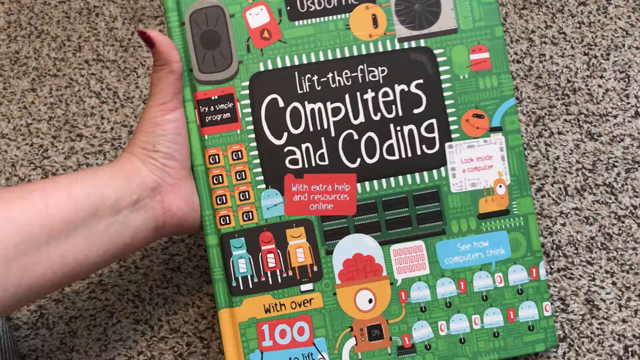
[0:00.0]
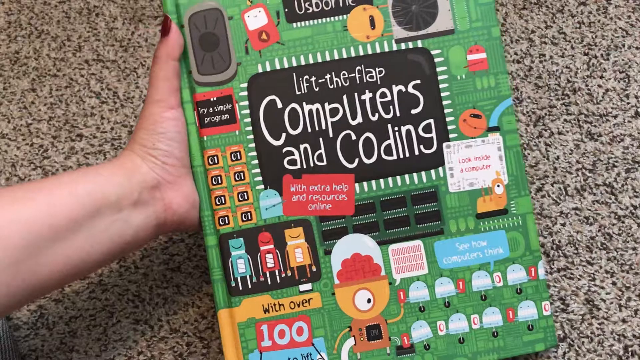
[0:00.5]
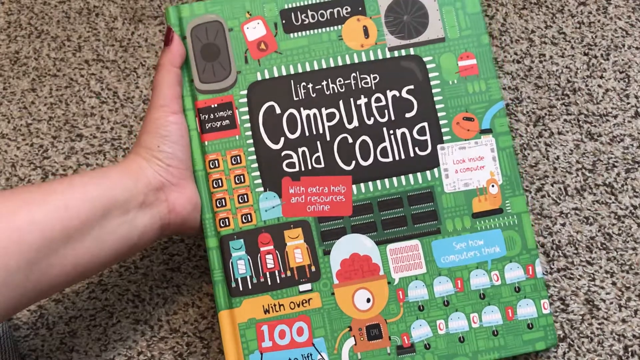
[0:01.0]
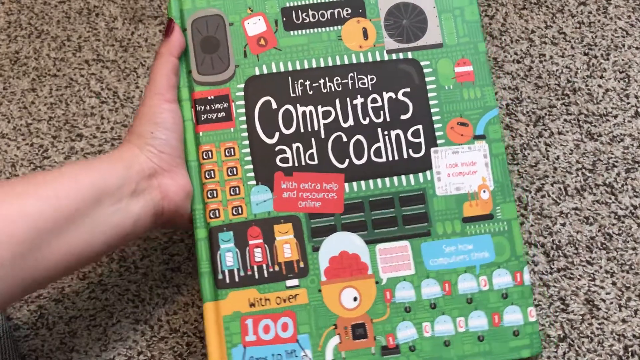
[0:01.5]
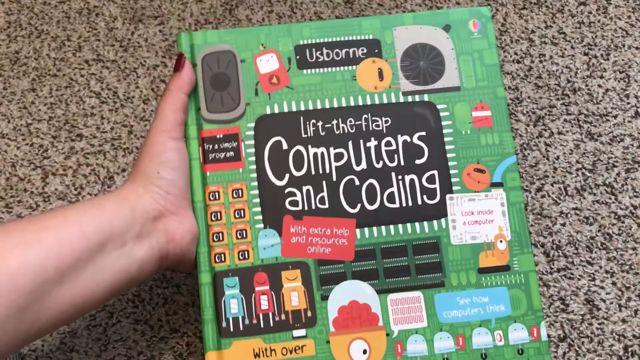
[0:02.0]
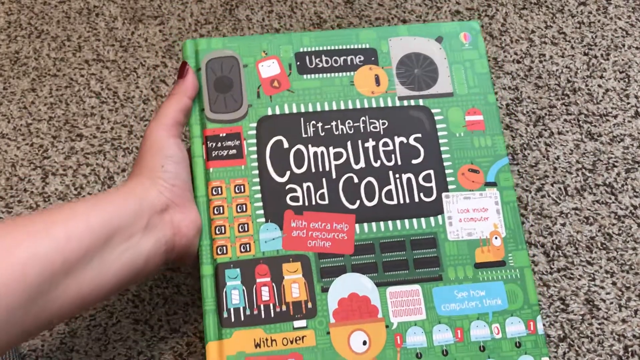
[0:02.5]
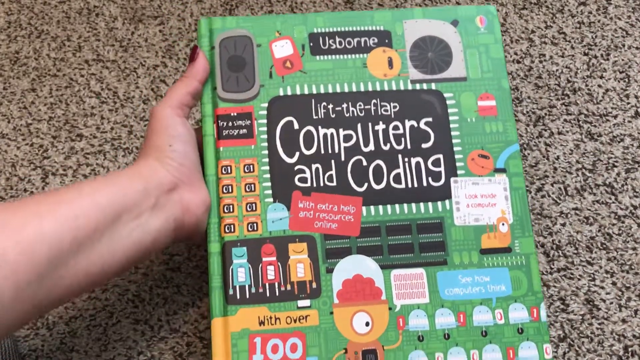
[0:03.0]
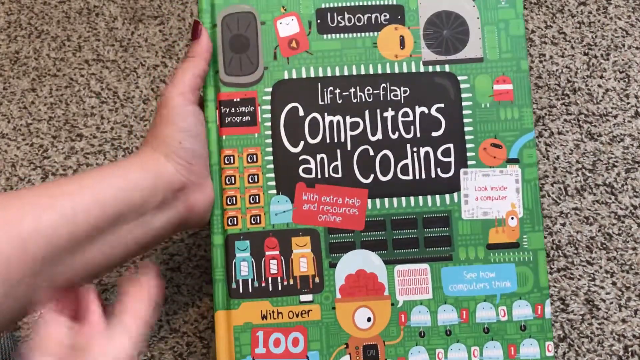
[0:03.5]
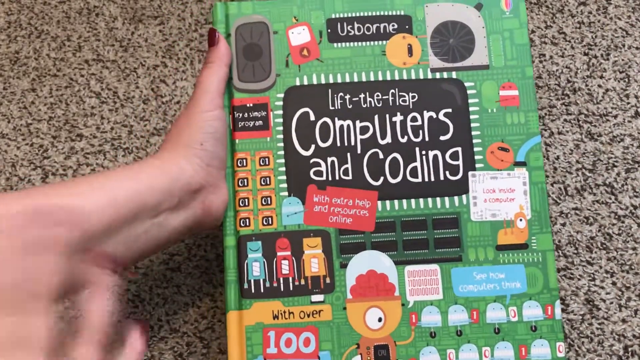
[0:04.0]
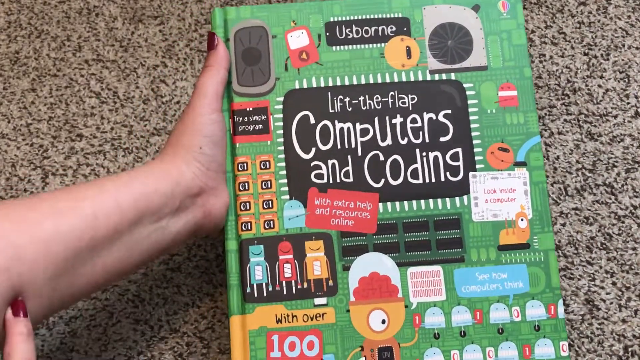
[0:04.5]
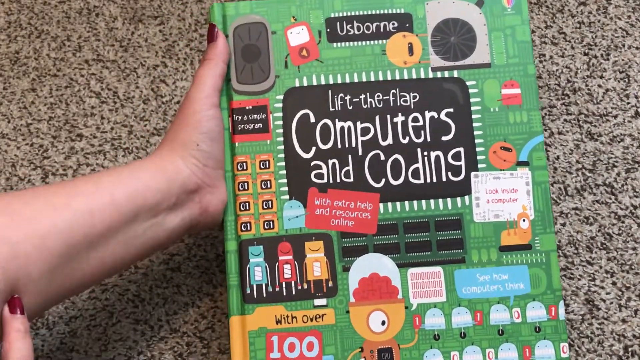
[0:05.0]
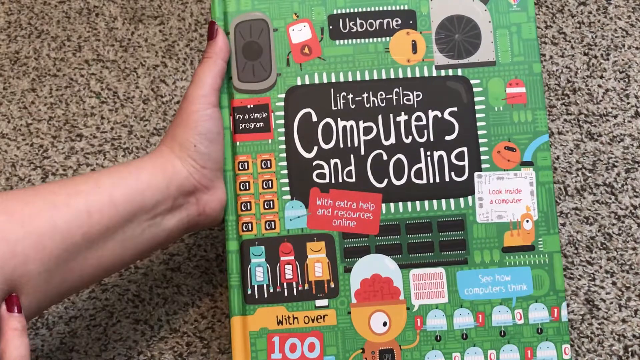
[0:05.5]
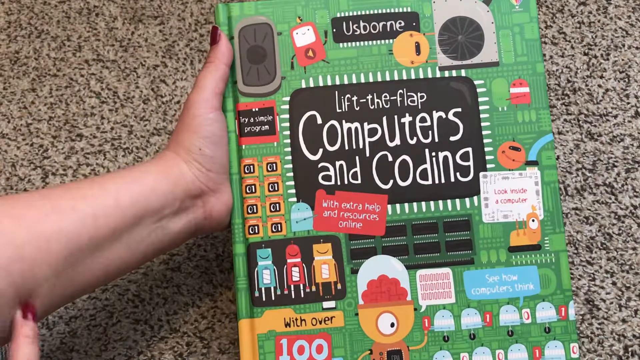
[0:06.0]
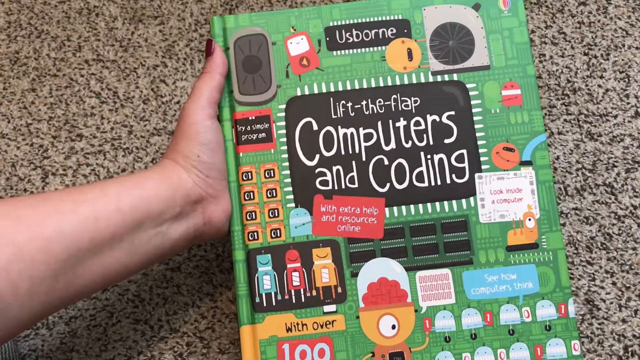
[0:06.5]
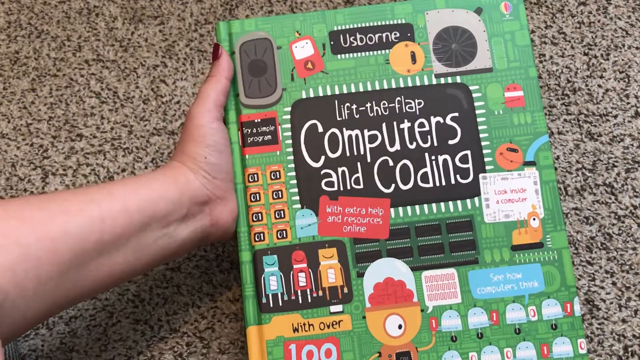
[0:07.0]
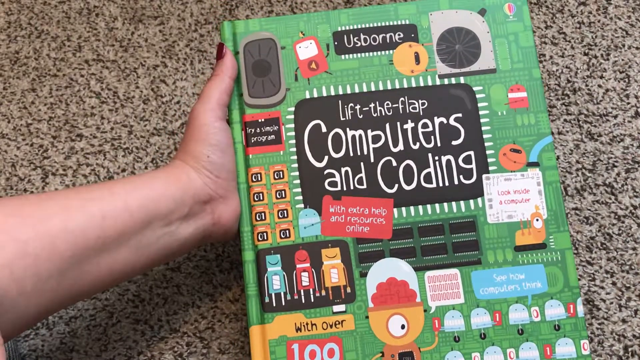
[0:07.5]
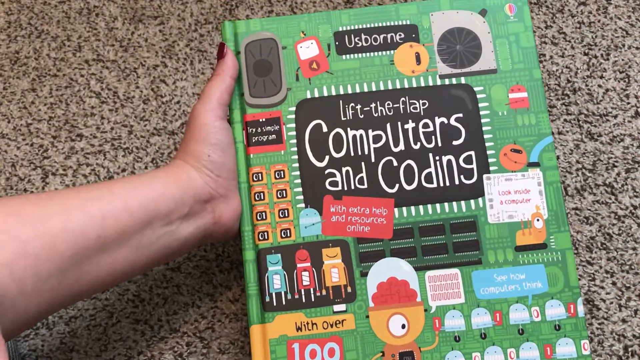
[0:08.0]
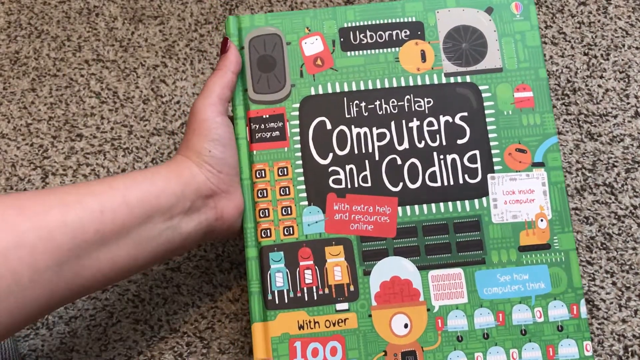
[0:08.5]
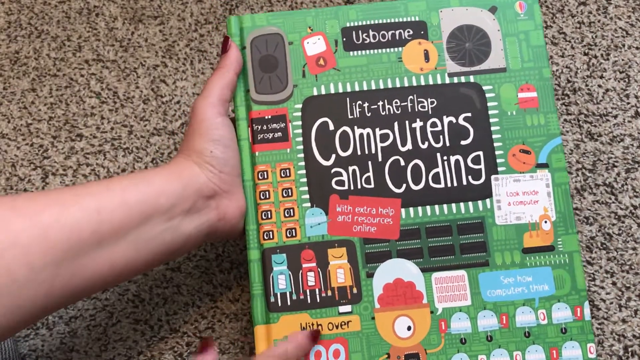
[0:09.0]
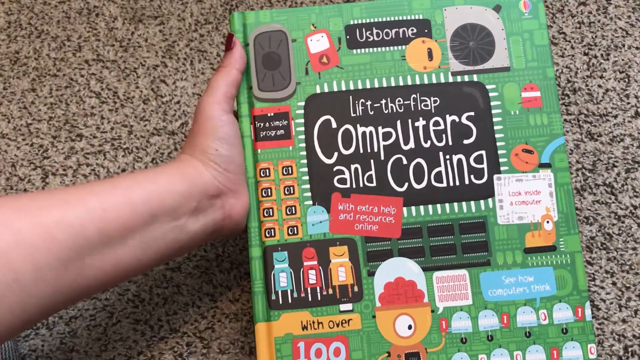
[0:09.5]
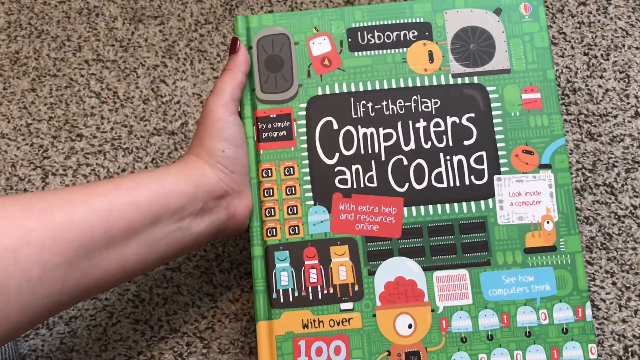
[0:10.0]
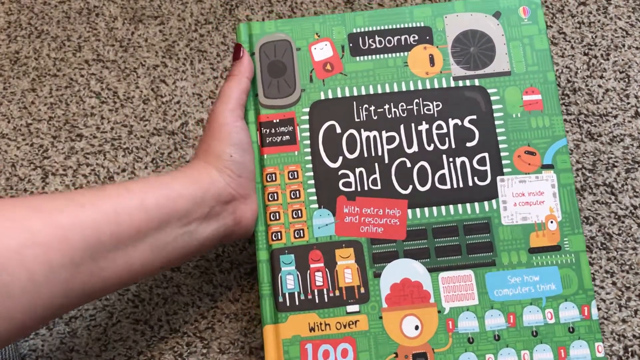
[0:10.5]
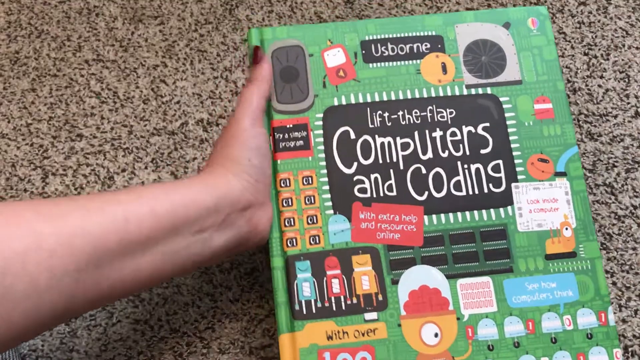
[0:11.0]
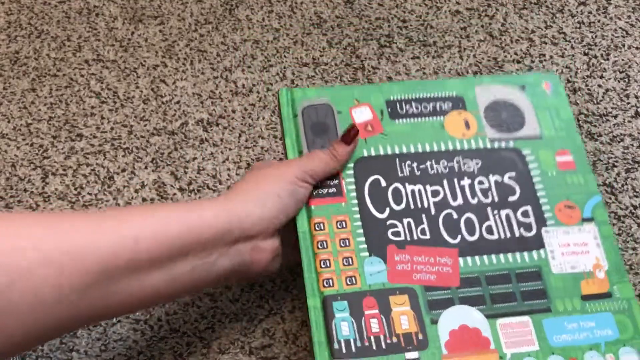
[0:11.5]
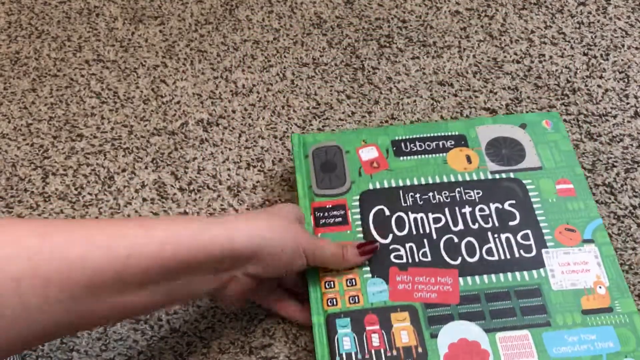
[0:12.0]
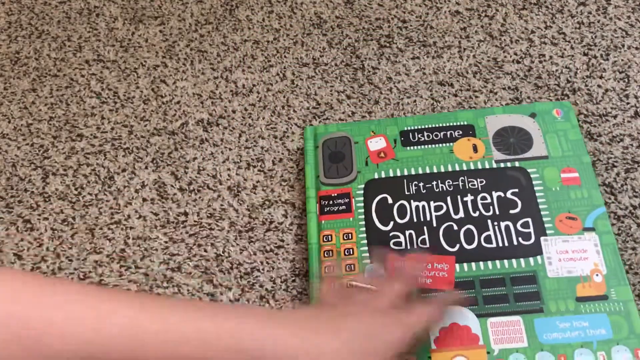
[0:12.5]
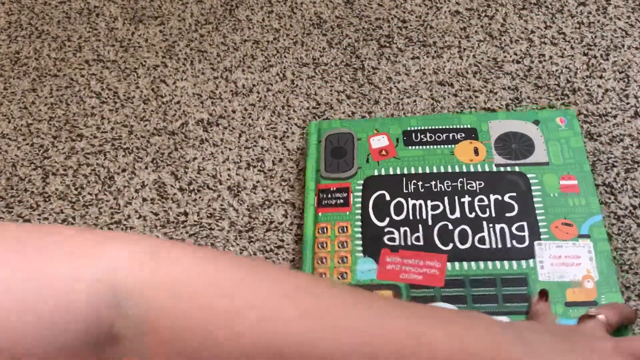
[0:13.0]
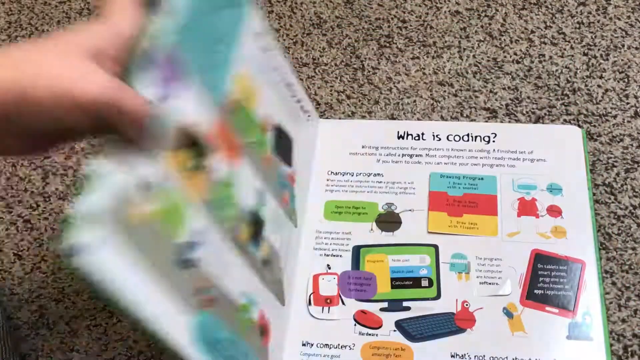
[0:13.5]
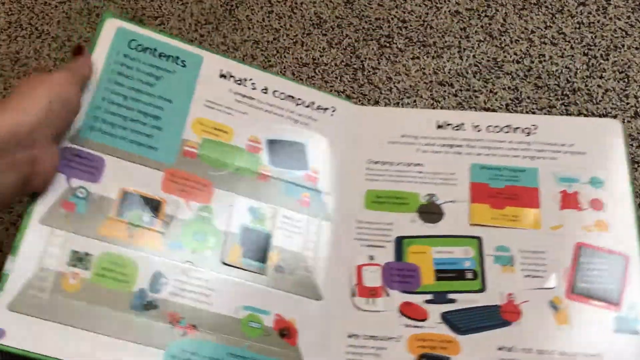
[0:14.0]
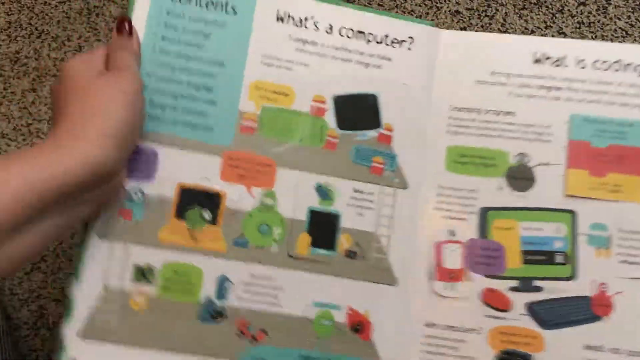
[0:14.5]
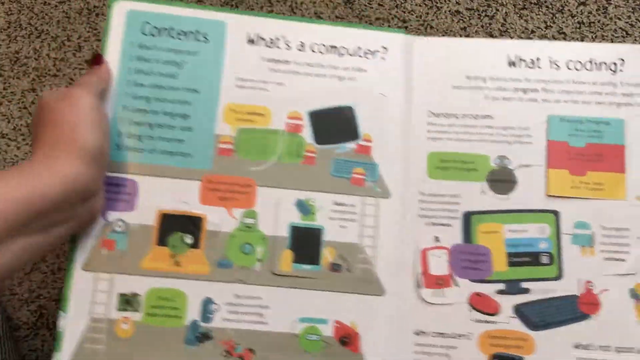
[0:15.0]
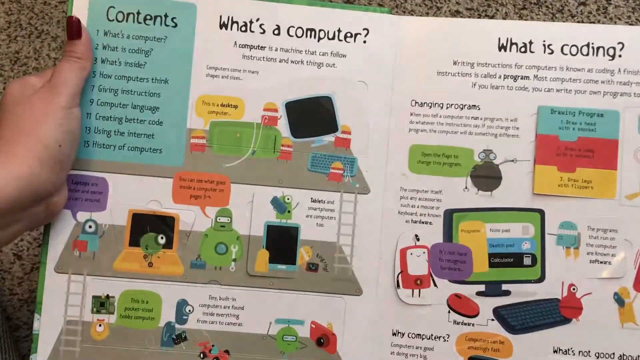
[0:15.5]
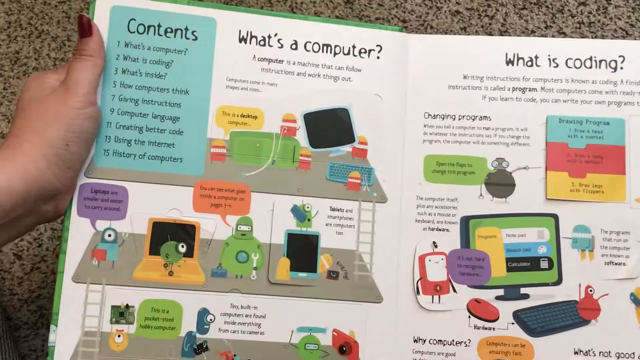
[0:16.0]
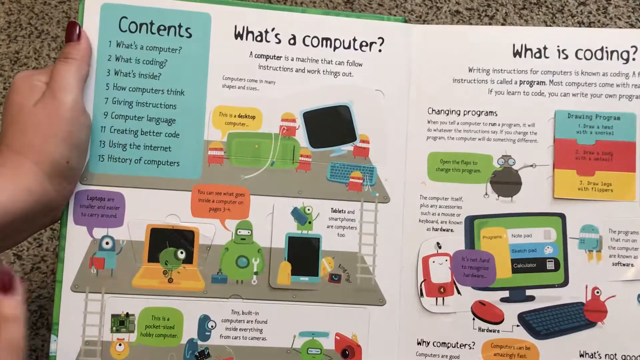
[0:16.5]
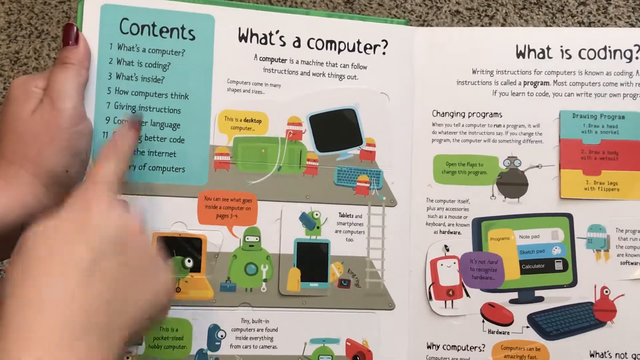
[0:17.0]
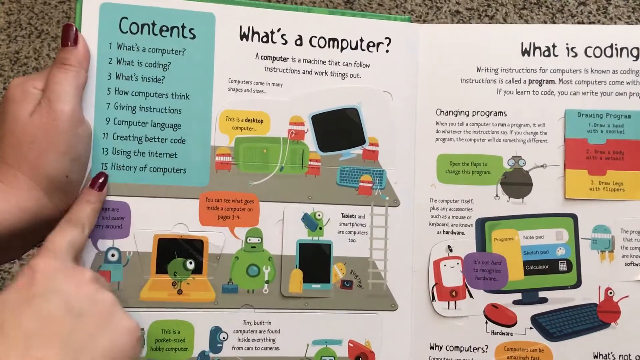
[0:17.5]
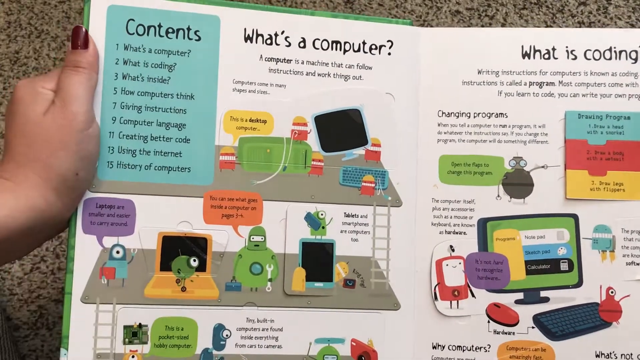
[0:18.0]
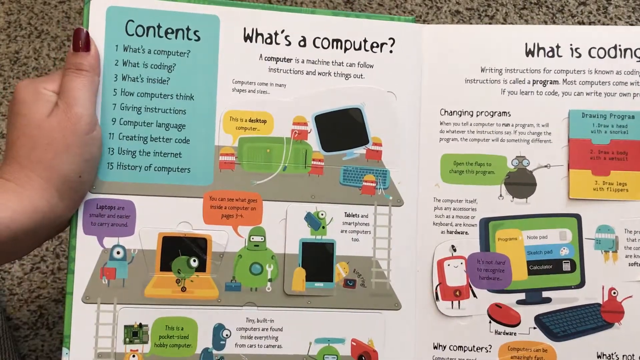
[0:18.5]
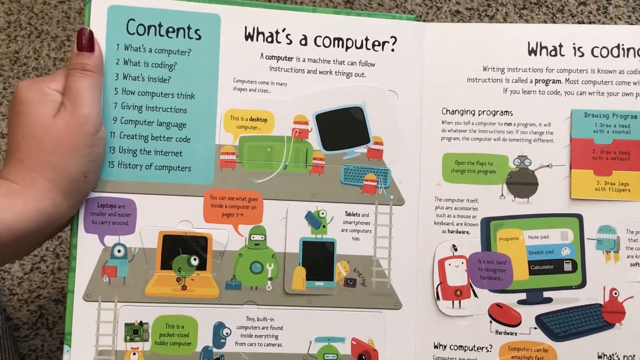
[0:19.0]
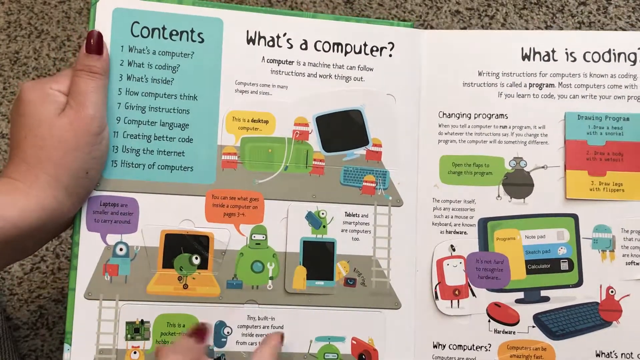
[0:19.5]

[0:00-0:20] The video looks like a book reveal. Against a carpet background, a woman holds a book; only her hands are visible. The book is Lift the Flap Computers and Coding, geared towards children or young teens. The cover is mostly green, with three robots and other machines on it. She places the book on the carpet and opens it to the front page. On the left side there is a contents box and the question "What's a computer?" with an illustration of a two-tiered desk holding different electronics, such as iPads and a tablet, along with kid-friendly-looking robots that have rounded corners and expressive eyes. The right page reads "What is coding" and shows a desktop computer with a separate keyboard and a chart in three colors, blue, red and yellow, that kind of looks like a jigsaw puzzle, plus other robots and devices.